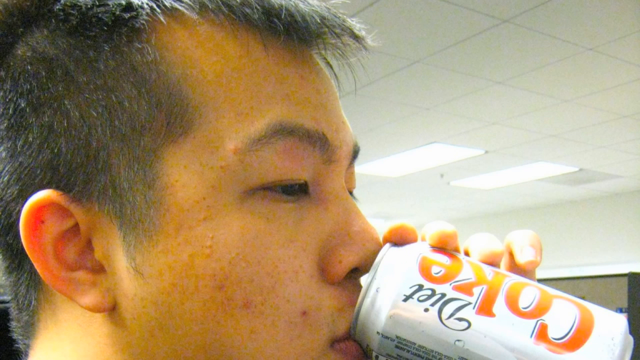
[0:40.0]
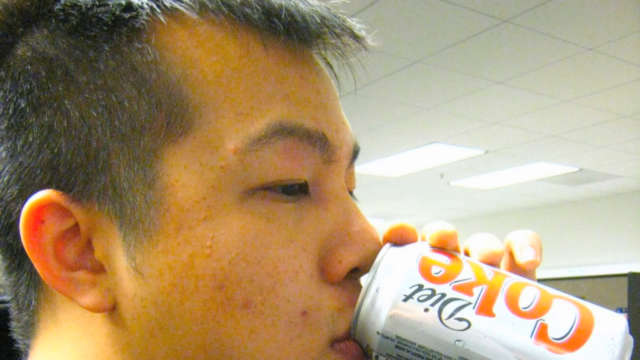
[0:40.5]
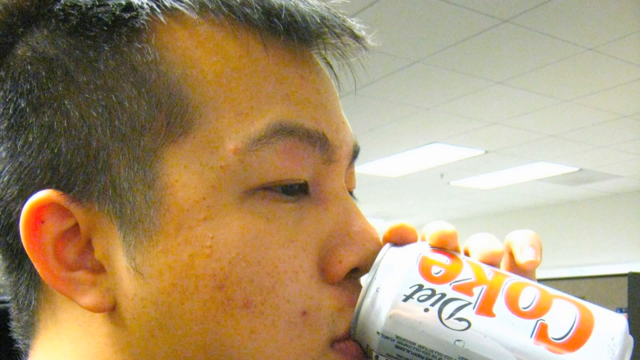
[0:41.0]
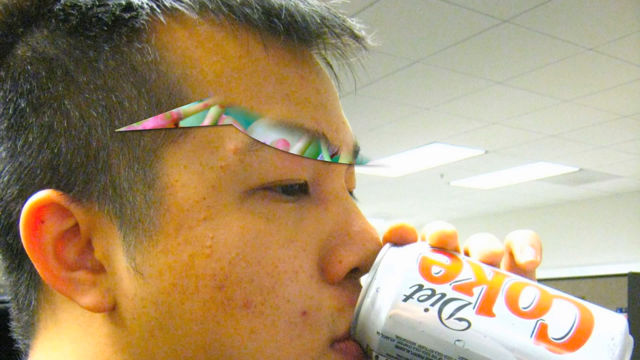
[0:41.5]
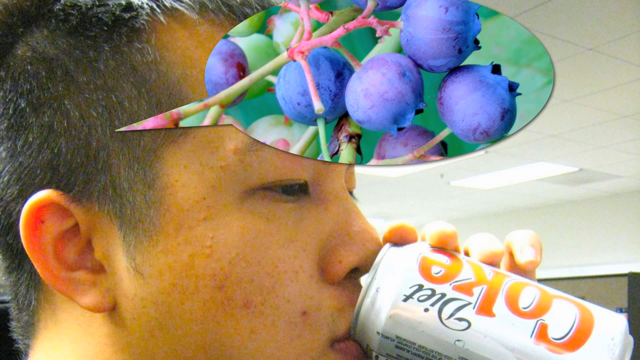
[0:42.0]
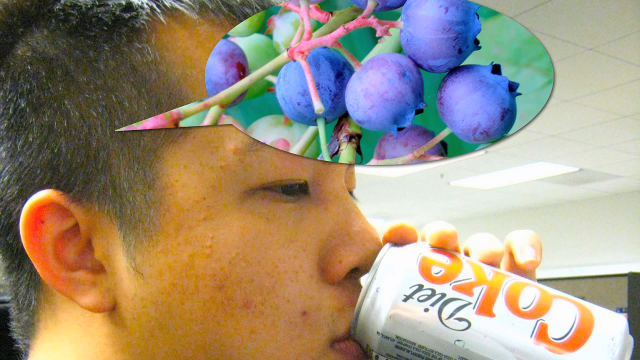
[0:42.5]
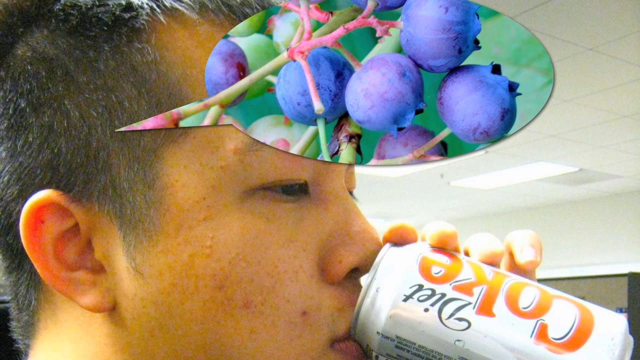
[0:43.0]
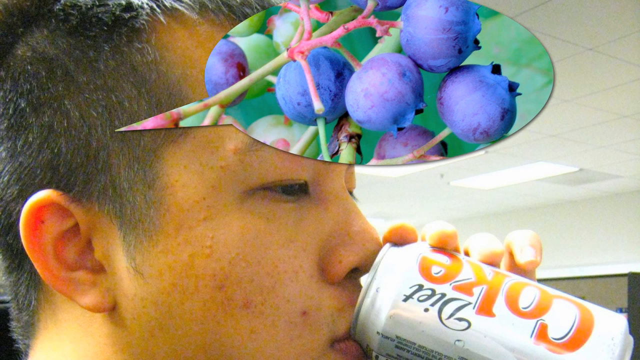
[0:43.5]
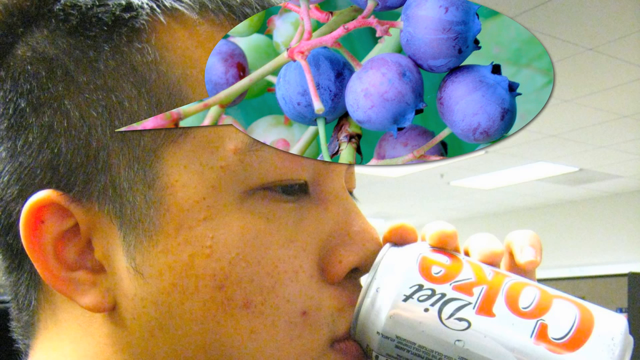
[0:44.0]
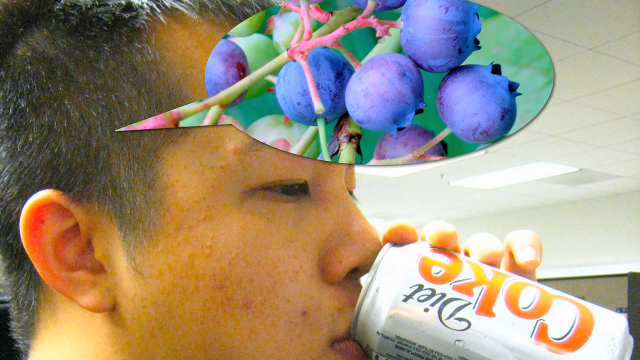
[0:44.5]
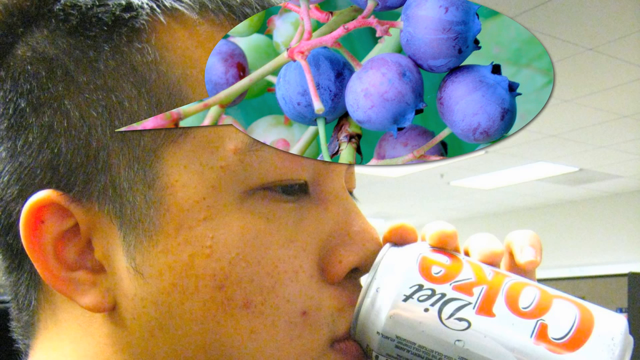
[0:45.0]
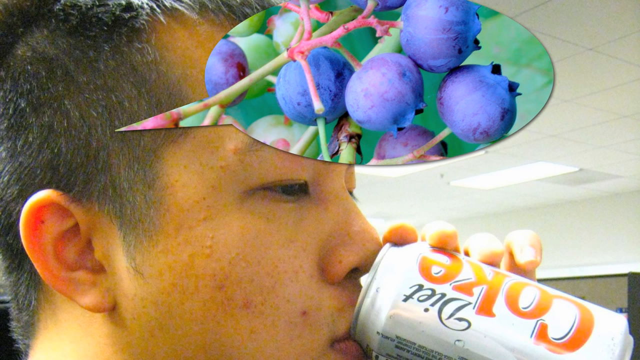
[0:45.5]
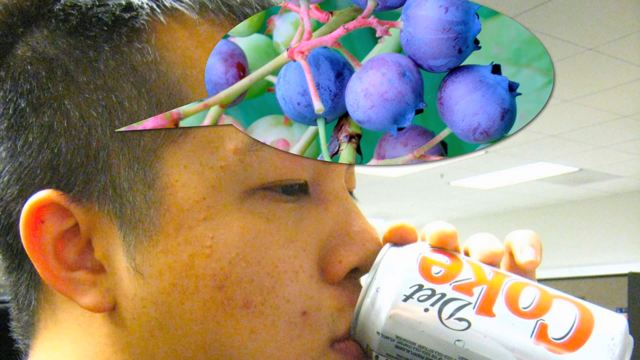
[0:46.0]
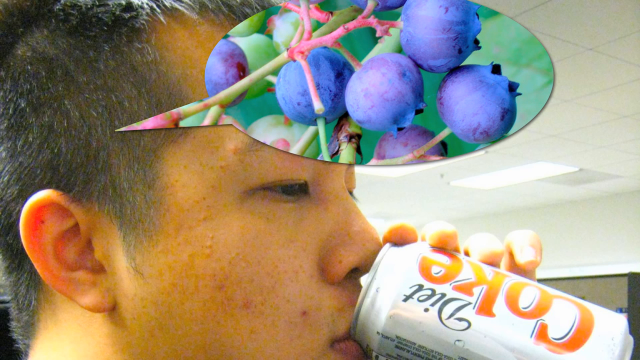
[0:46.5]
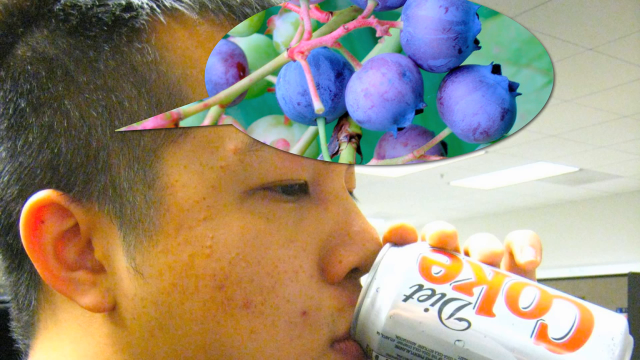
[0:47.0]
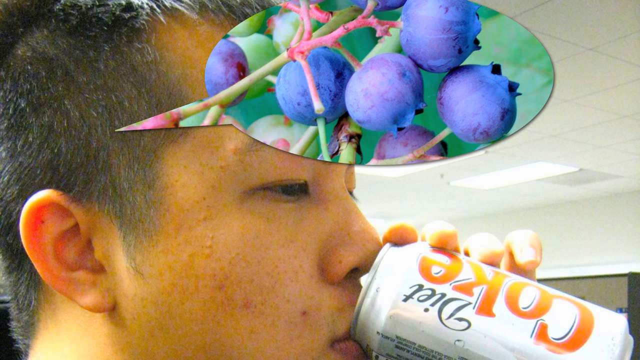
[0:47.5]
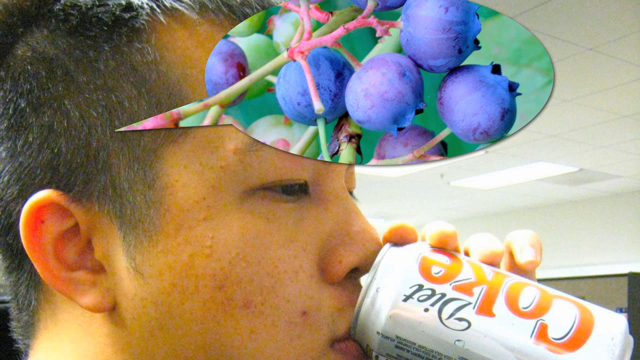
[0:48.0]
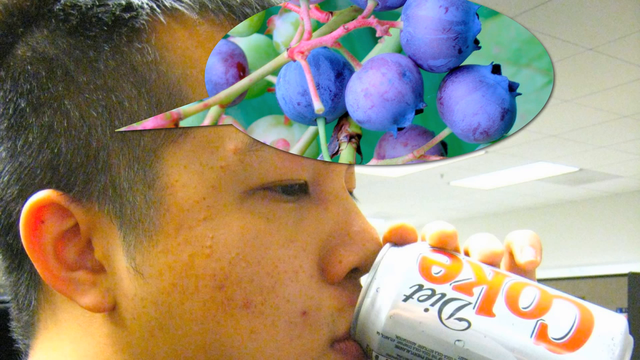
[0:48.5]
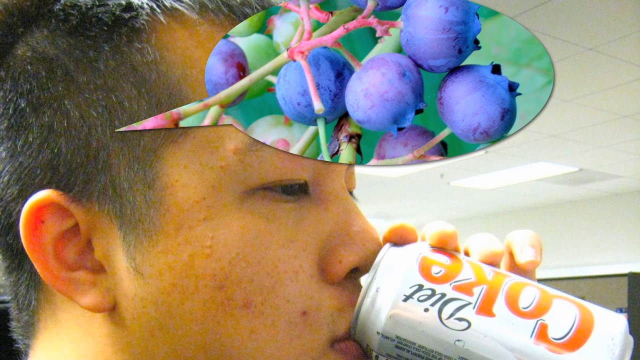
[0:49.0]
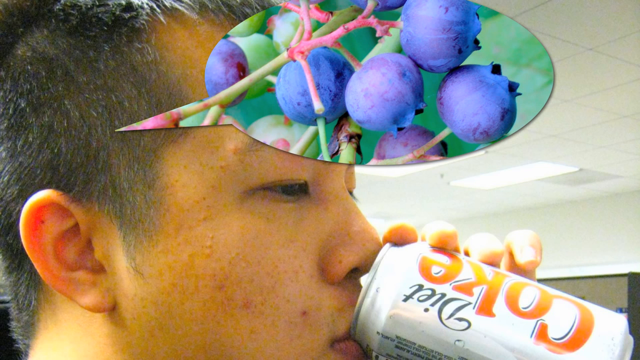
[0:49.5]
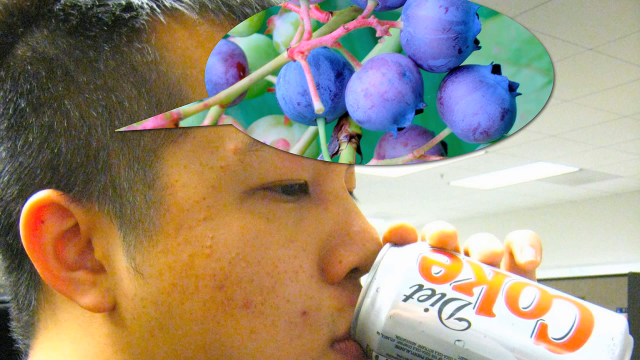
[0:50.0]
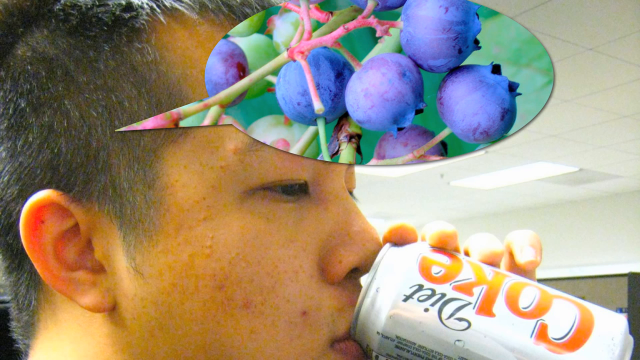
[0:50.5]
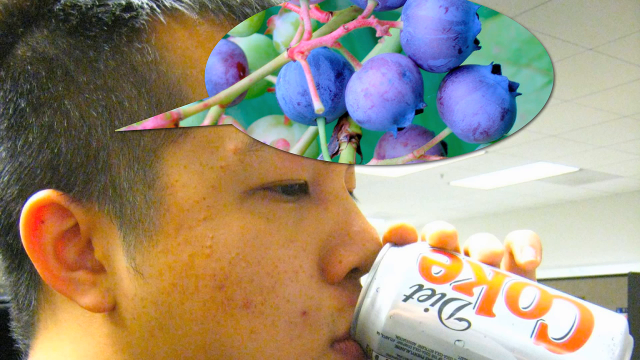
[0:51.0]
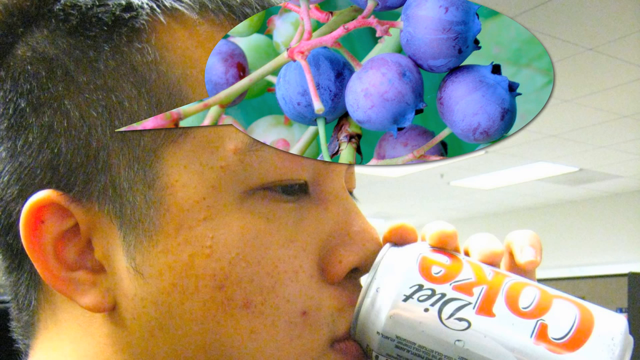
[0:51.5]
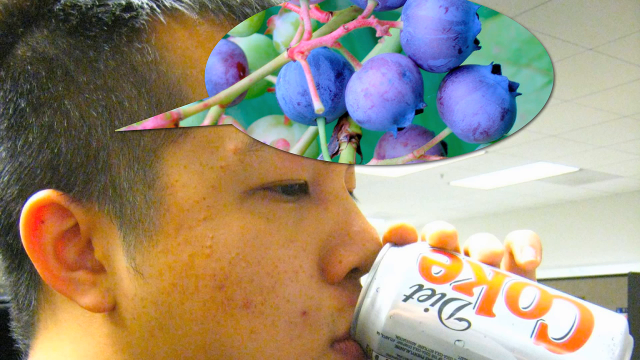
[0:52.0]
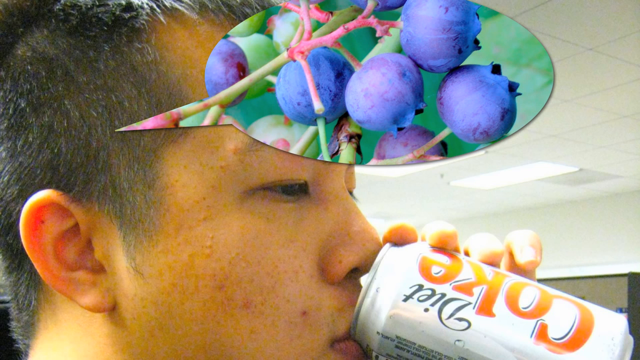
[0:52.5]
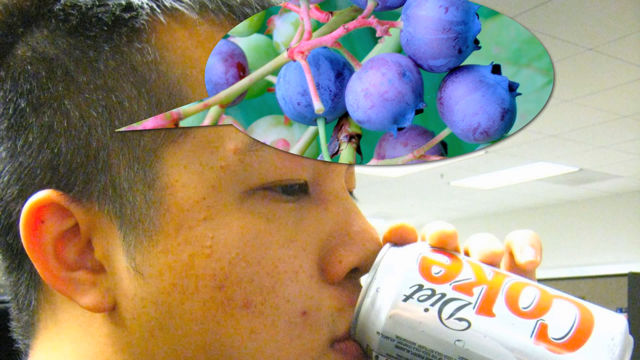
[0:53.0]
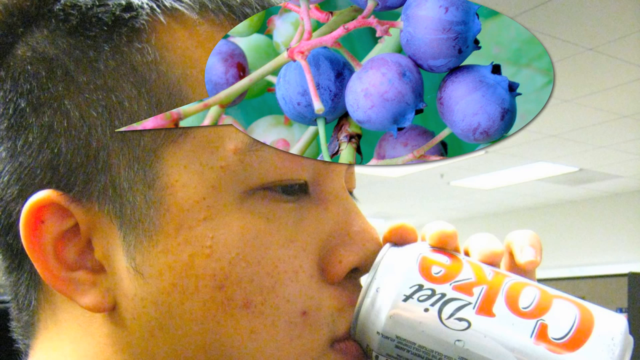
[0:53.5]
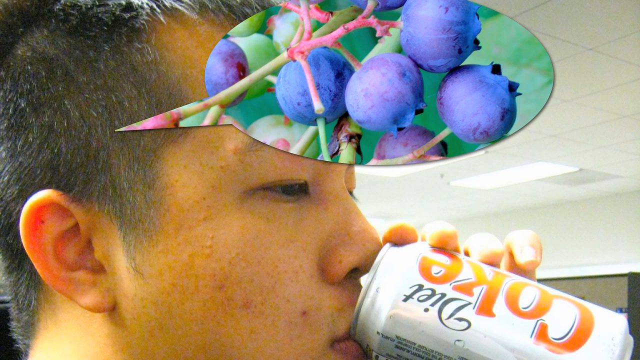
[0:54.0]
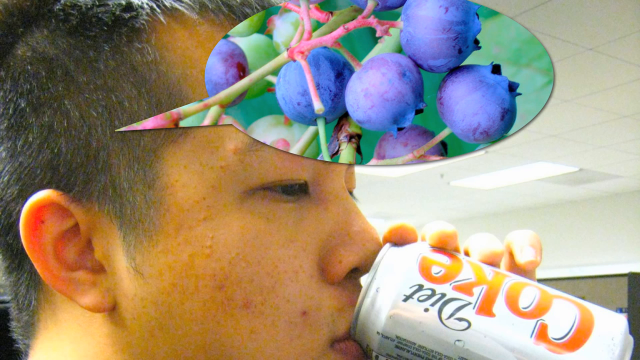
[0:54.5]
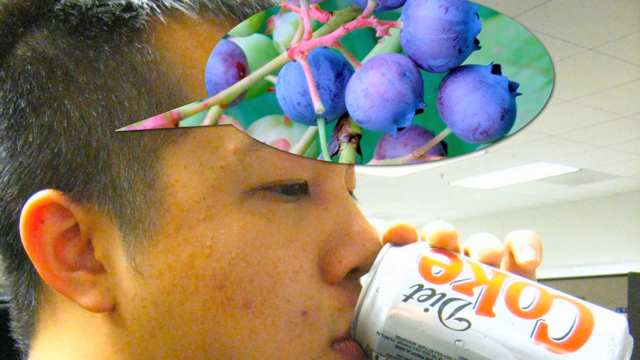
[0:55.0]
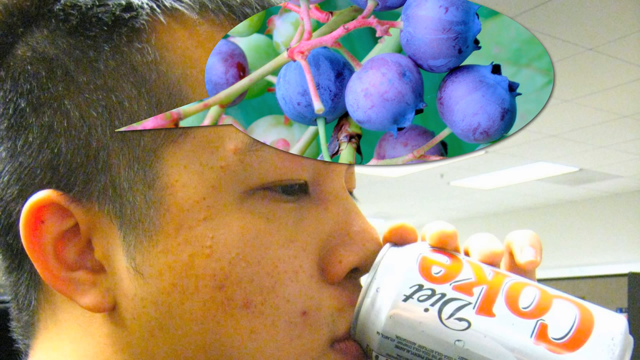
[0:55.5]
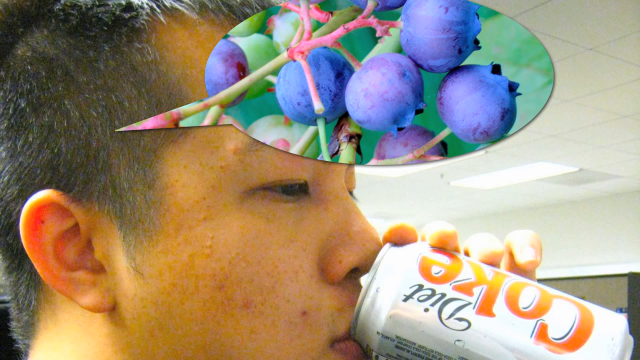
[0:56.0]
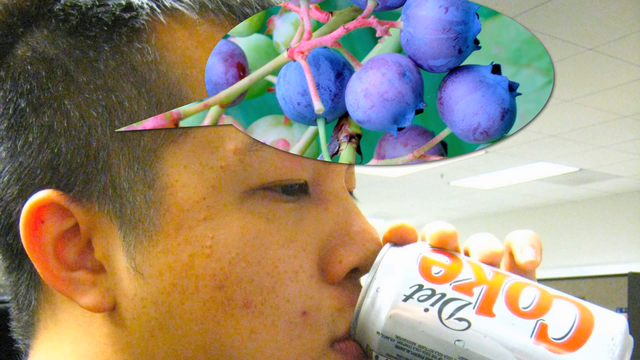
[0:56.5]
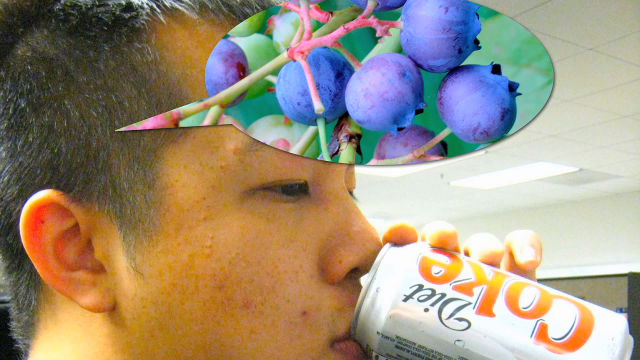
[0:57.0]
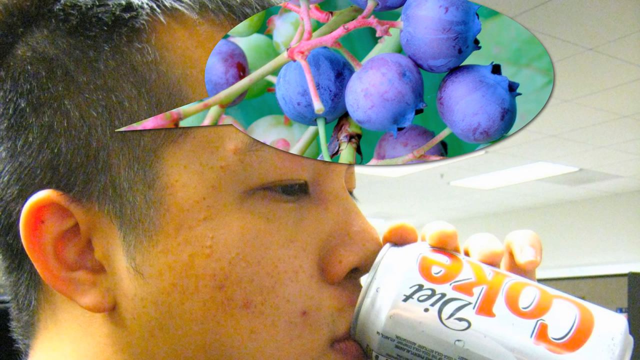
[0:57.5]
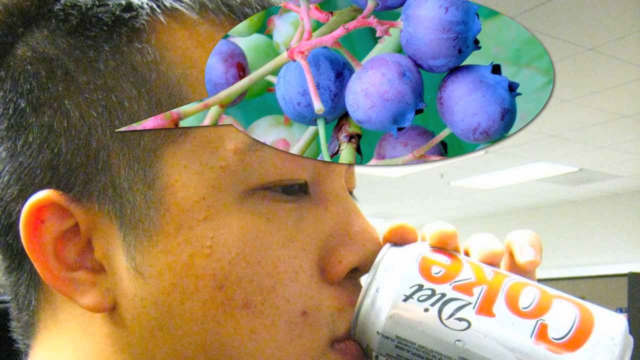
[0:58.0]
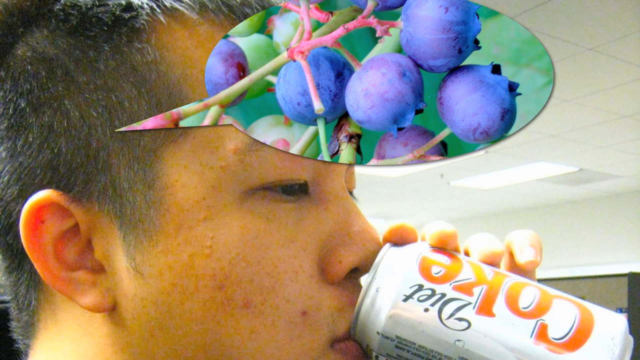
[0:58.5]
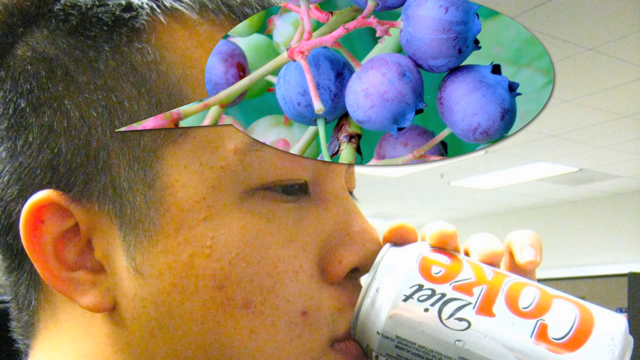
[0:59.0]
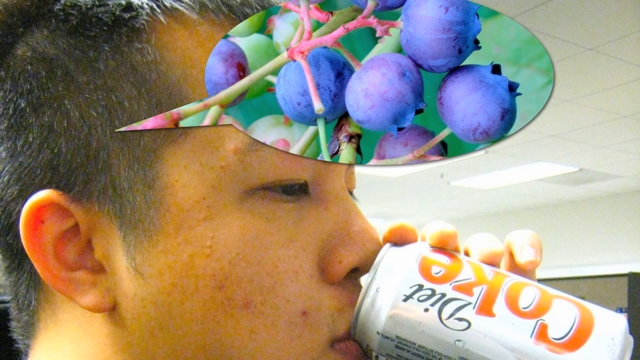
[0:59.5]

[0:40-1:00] A young Asian man with short cropped hair is seen from the right side of his face, drinking a Diet Coke from a can, holding it to his lips with his left hand. On the right of the screen there are just light sources. A thought bubble appears, coming from his head, superimposed over the video in the top center of the screen. Inside it are blueberries on a vine, with five blueberries hanging from the vine, showing that he is thinking of blueberries as he drinks the Diet Coke.